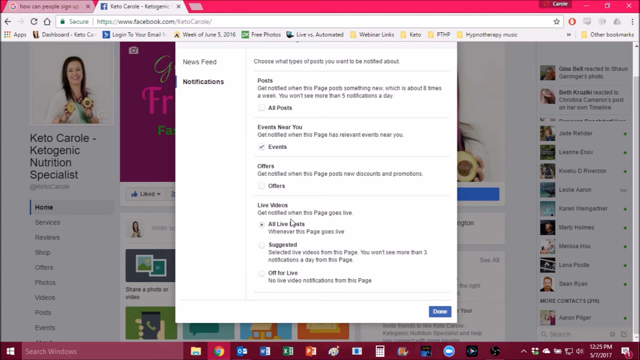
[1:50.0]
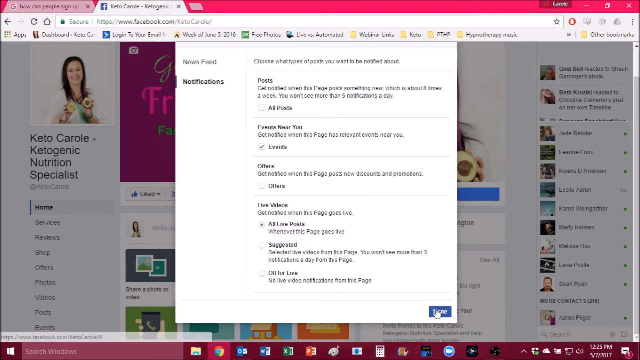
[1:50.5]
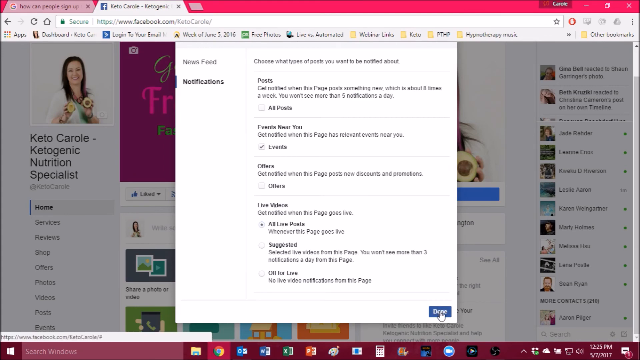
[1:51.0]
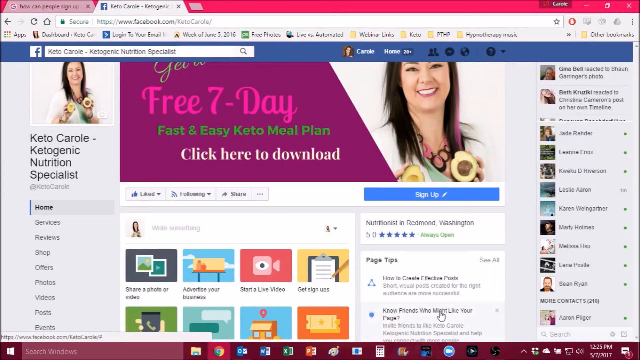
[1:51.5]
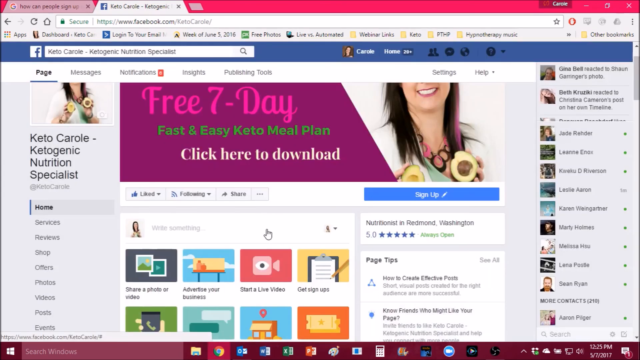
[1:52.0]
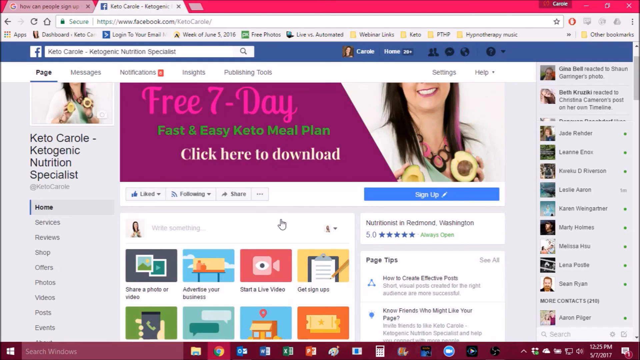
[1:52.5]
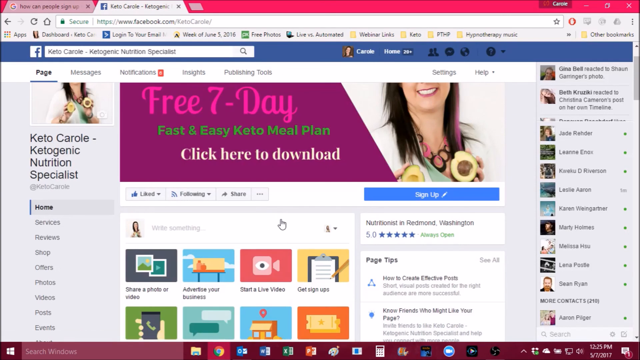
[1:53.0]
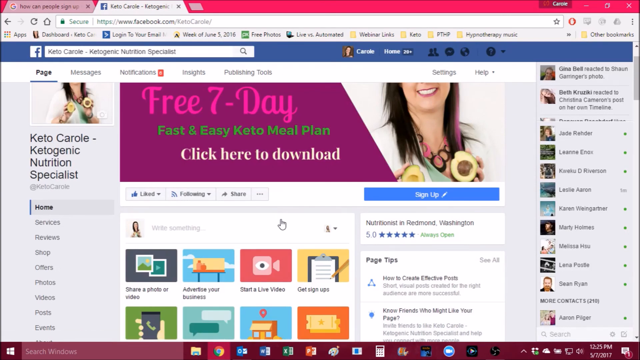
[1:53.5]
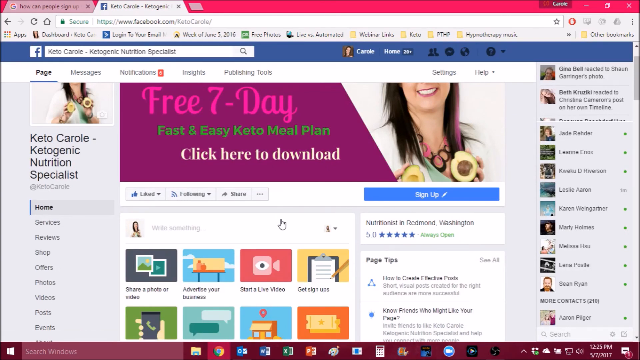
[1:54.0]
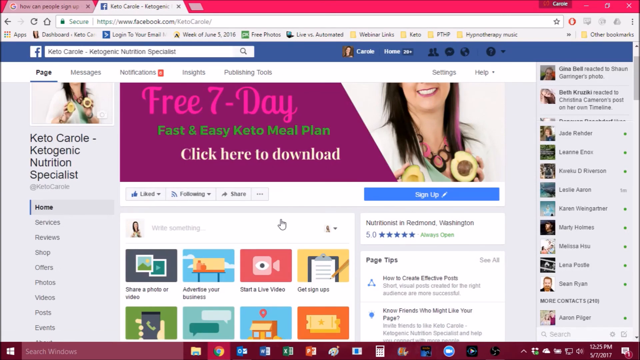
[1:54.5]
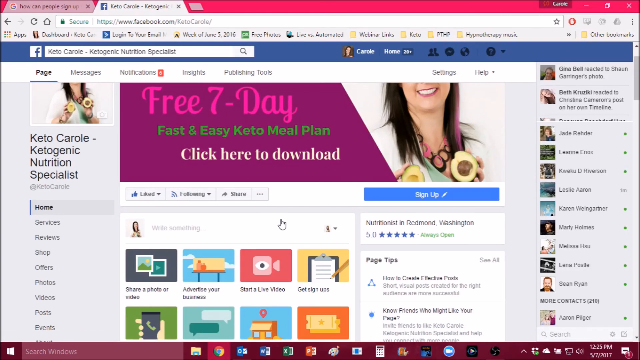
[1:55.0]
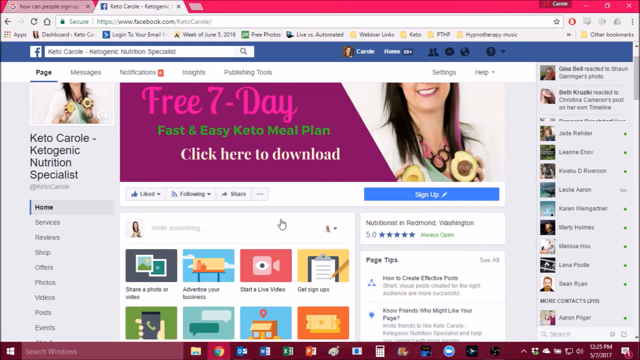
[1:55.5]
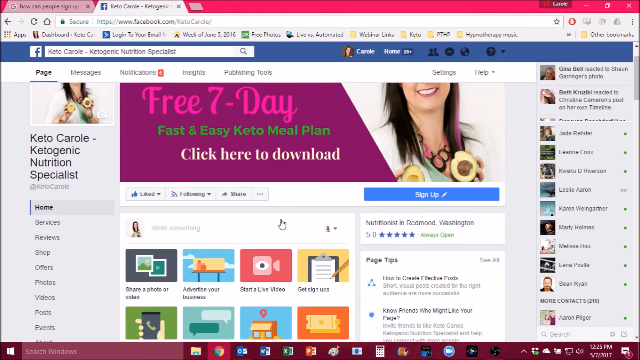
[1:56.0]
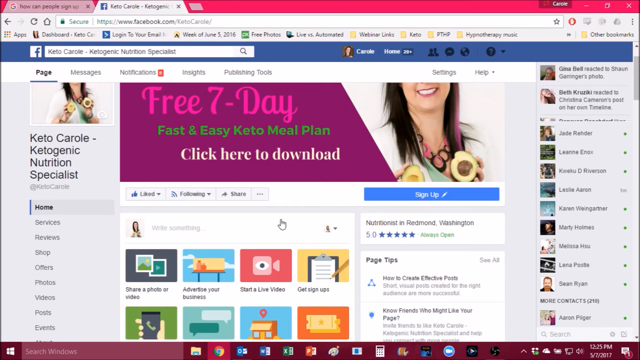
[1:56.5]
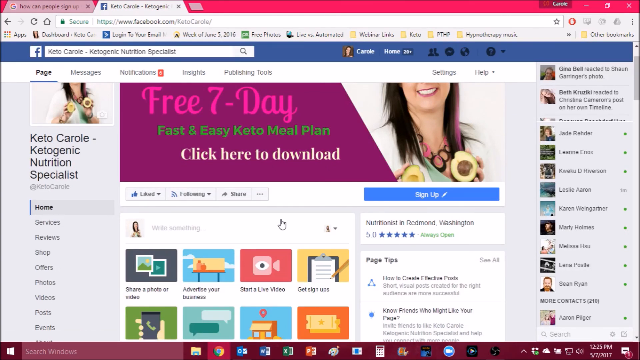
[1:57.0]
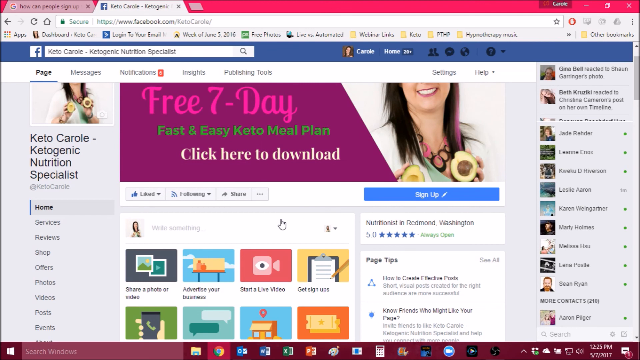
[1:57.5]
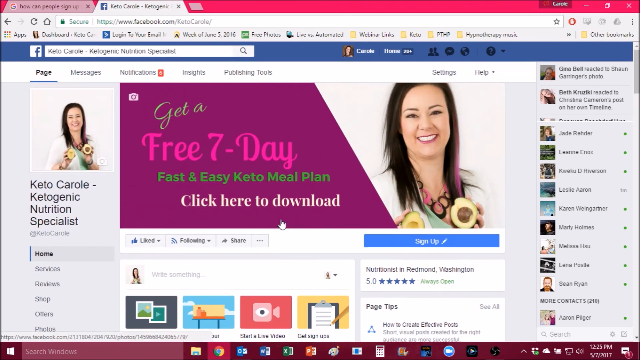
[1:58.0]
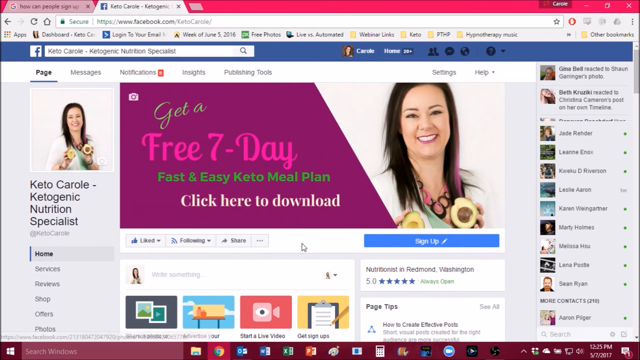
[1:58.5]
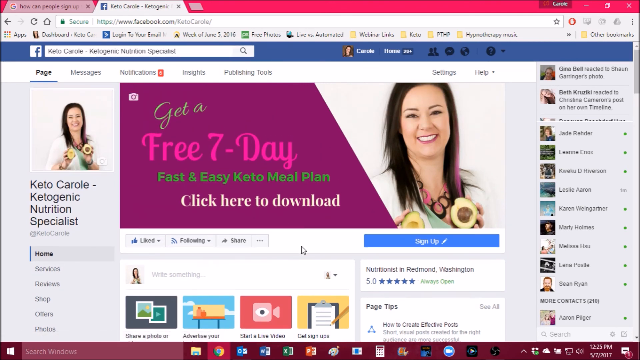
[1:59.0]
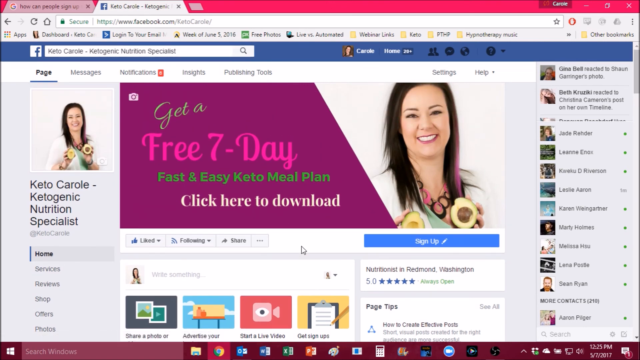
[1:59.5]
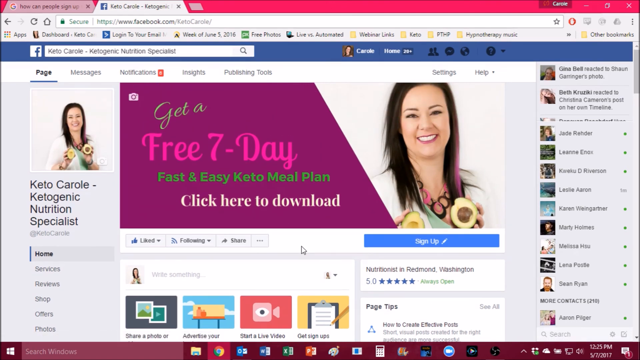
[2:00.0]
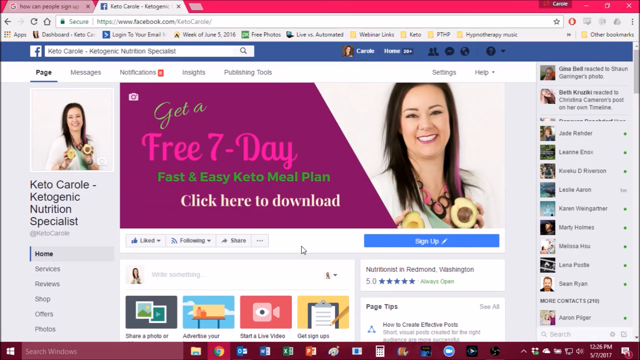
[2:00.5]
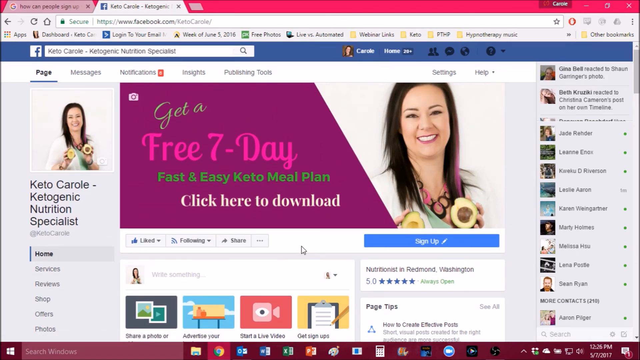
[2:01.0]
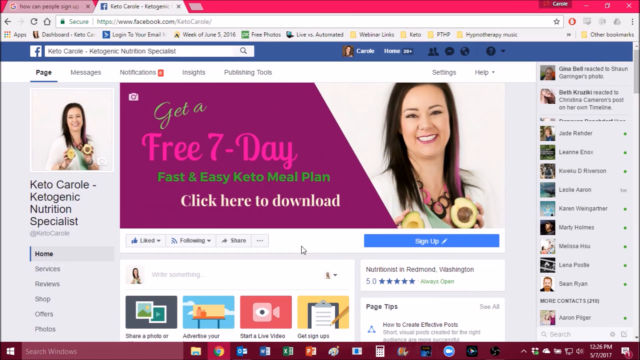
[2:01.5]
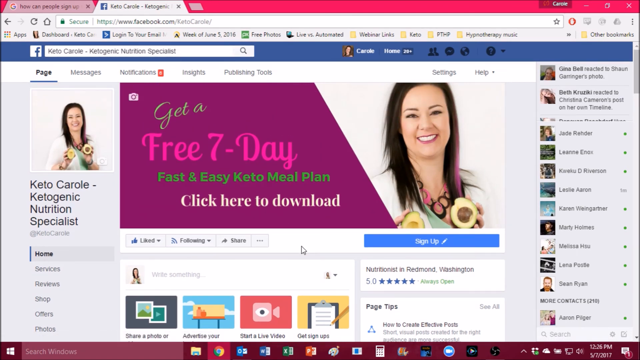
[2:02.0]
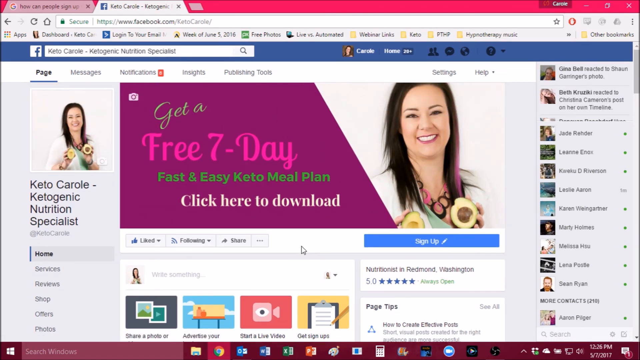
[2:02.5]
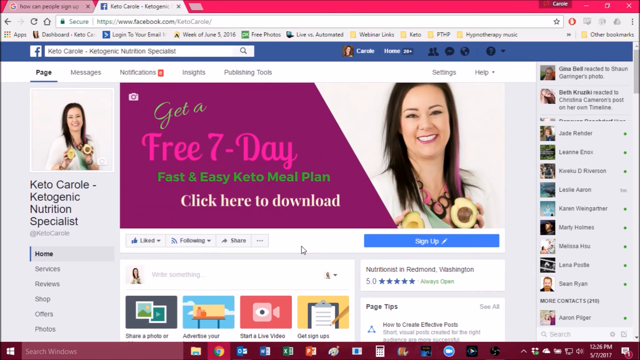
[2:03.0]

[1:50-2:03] The notifications box is still open. The mouse moves from hovering over the all live posts section quickly down to the bottom right and clicks the done button, and the box disappears. The home screen of the KetoCarol Ketogenic Nutrition Specialist page appears, scrolled down slightly. The mouse moves a bit to the right over what looks like a box on the right and kind of stays there without moving, then scrolls up a bit to the very top of the home page. The cursor changes from a pointer finger to an arrow.